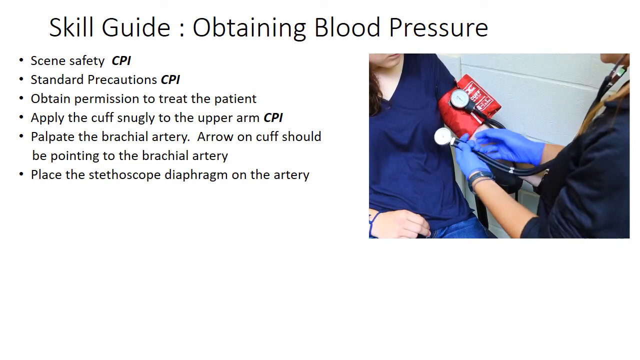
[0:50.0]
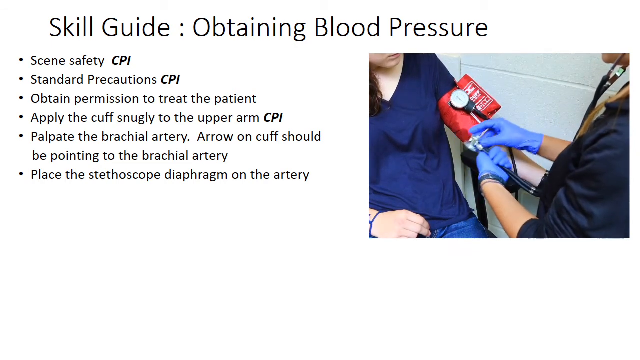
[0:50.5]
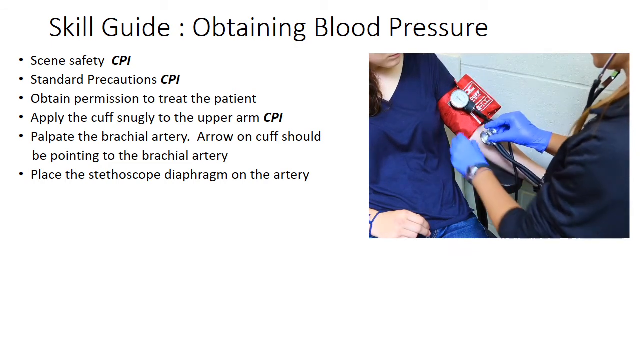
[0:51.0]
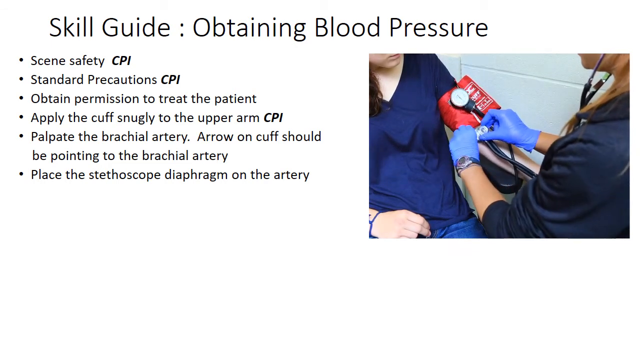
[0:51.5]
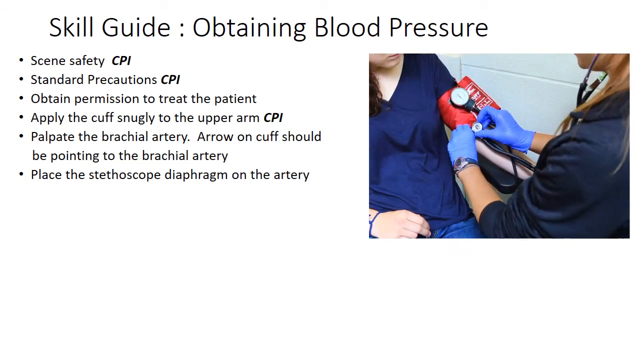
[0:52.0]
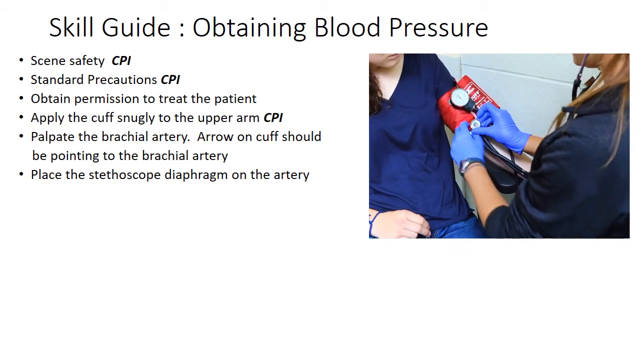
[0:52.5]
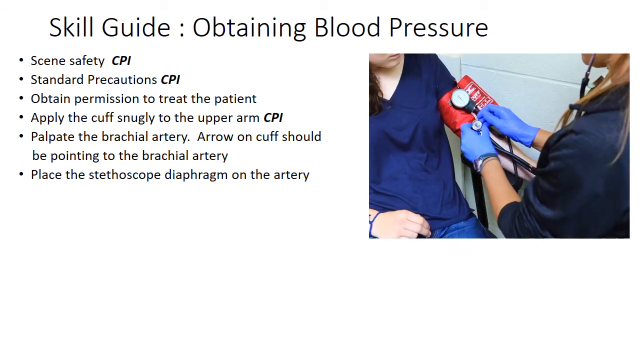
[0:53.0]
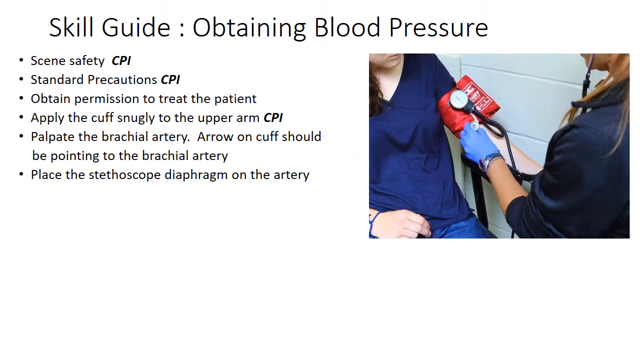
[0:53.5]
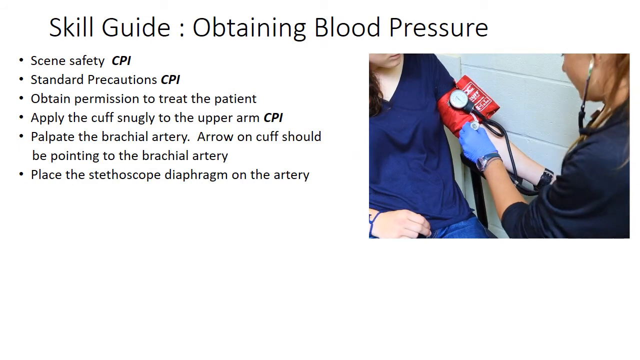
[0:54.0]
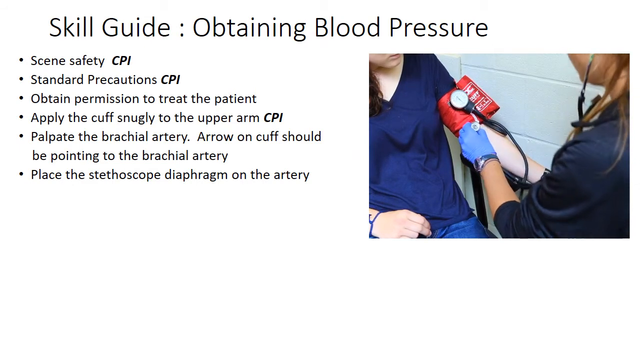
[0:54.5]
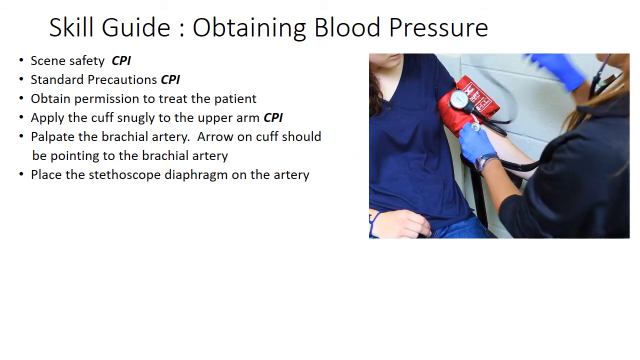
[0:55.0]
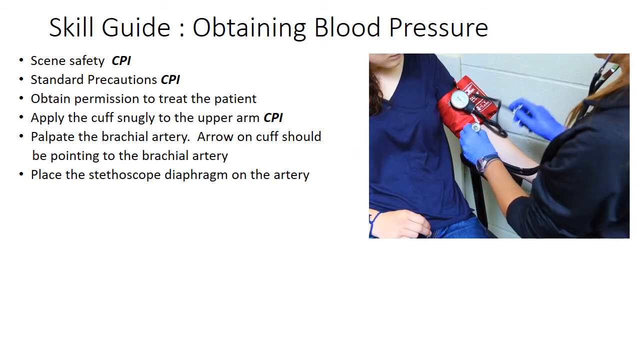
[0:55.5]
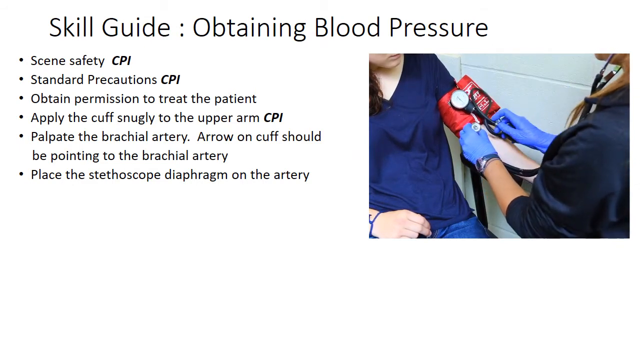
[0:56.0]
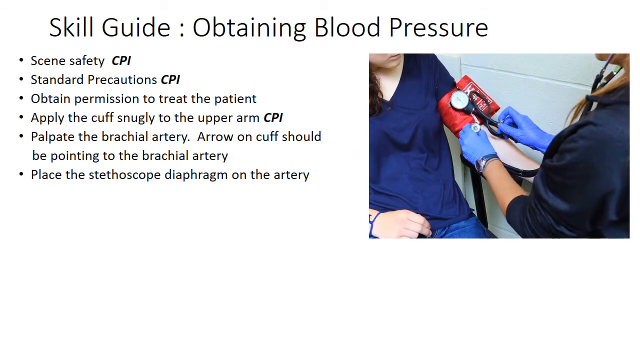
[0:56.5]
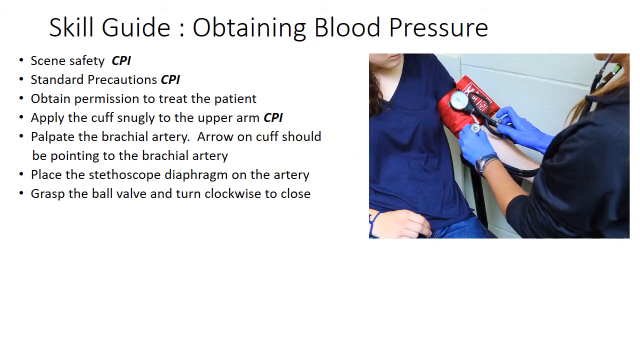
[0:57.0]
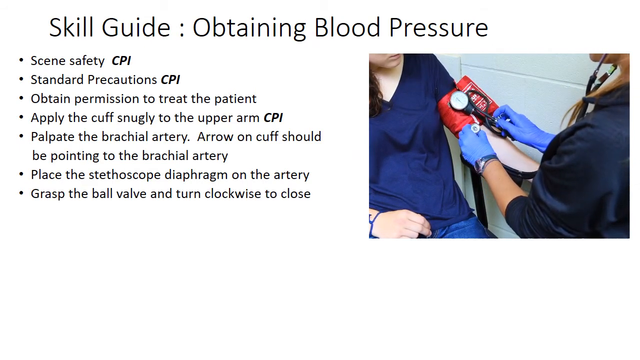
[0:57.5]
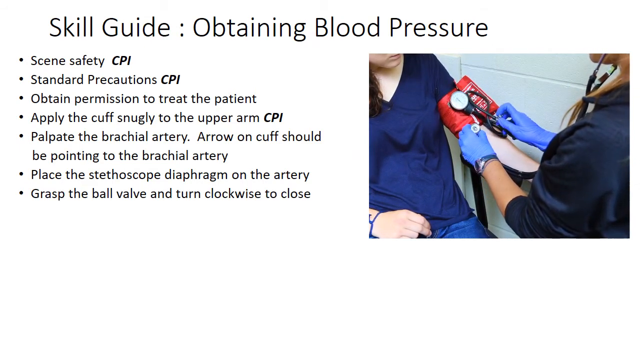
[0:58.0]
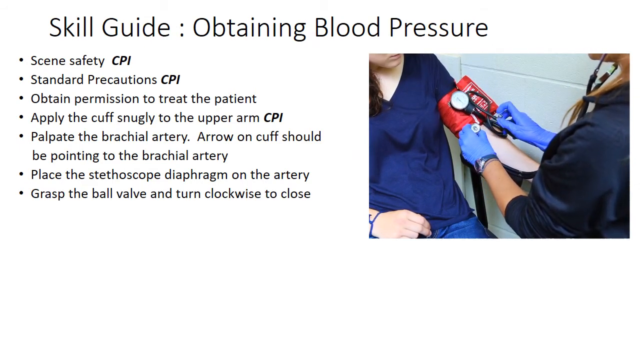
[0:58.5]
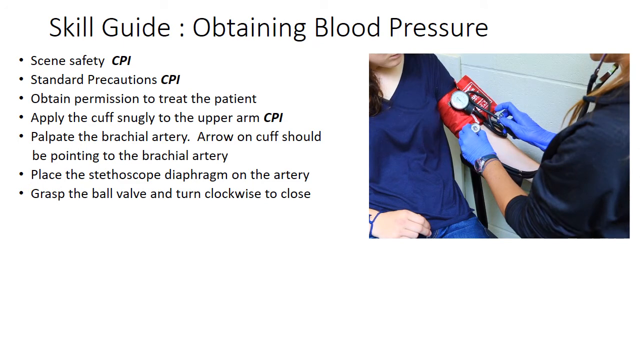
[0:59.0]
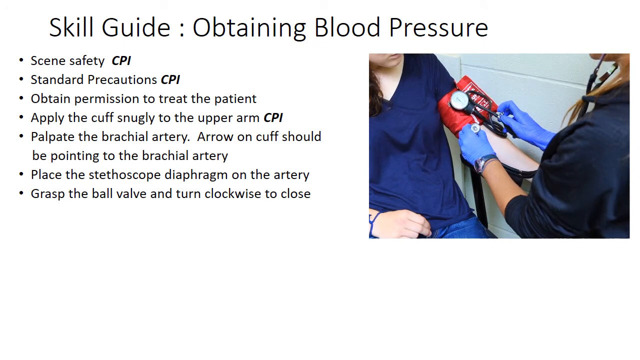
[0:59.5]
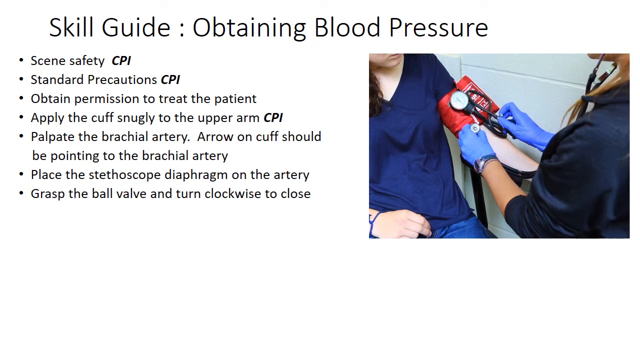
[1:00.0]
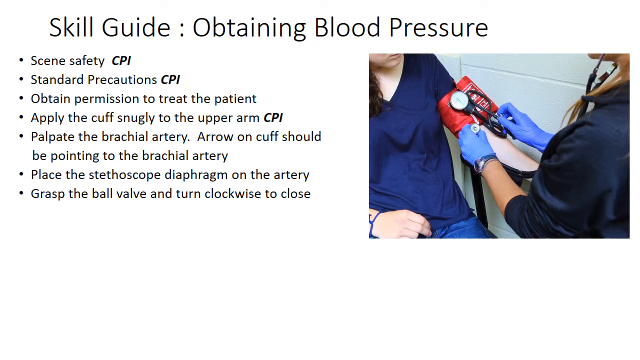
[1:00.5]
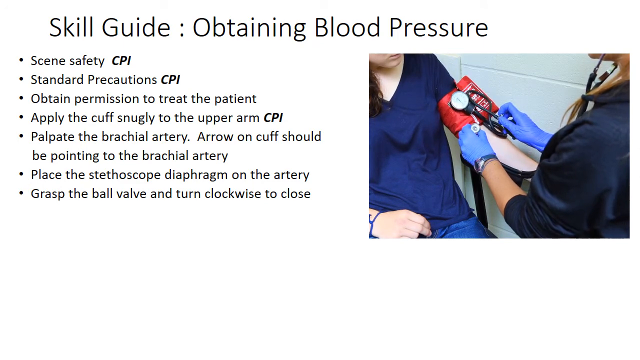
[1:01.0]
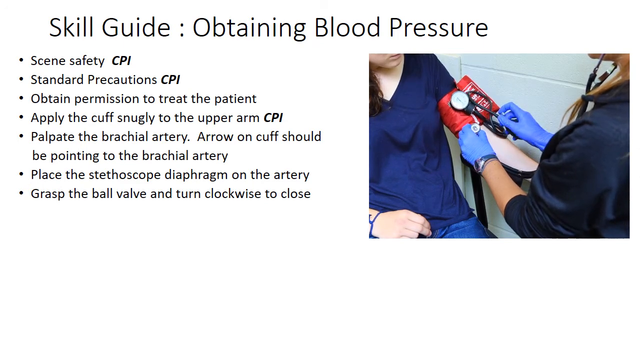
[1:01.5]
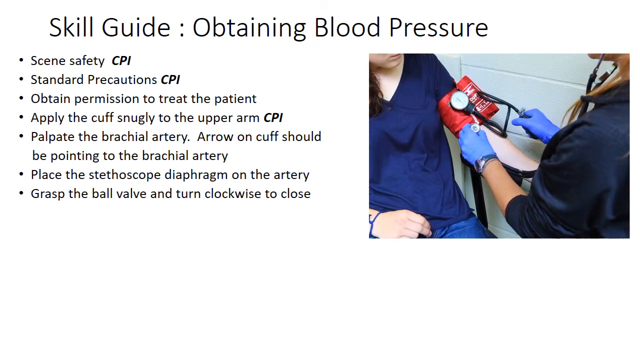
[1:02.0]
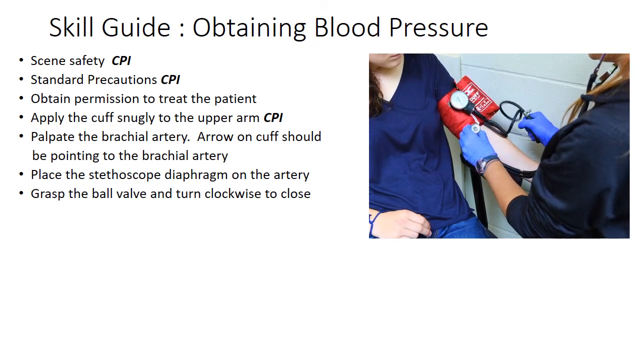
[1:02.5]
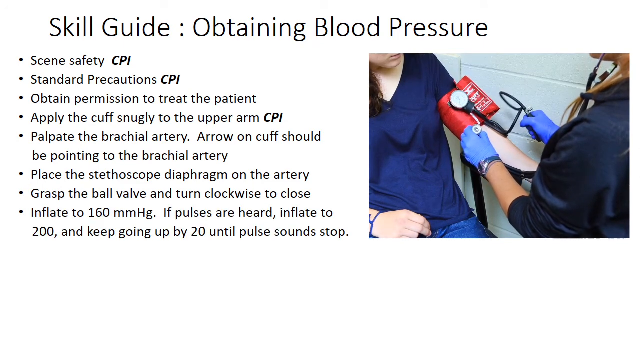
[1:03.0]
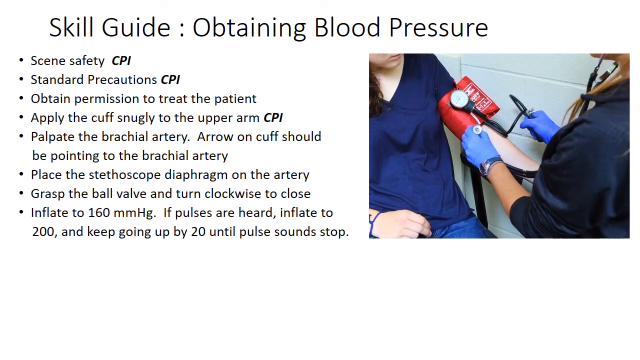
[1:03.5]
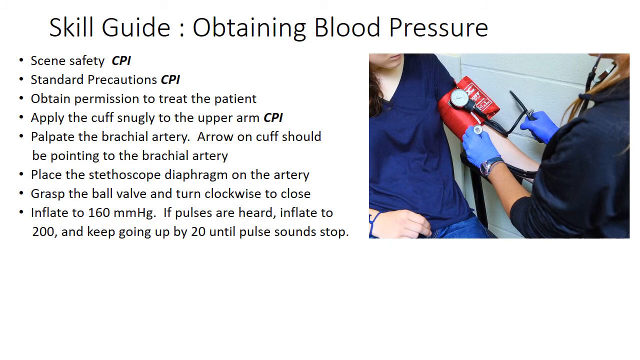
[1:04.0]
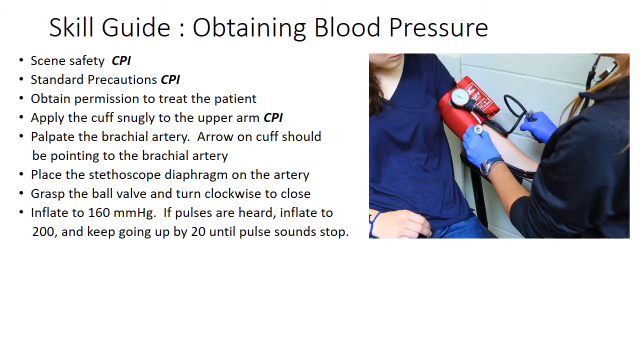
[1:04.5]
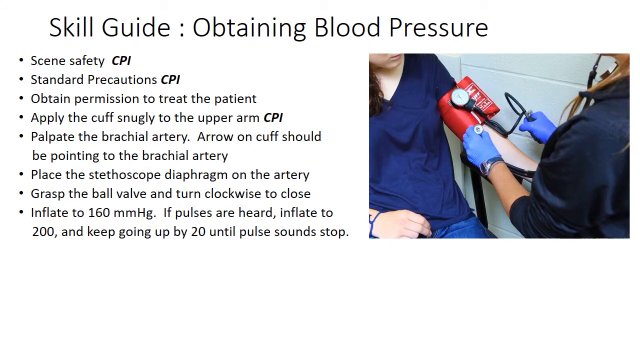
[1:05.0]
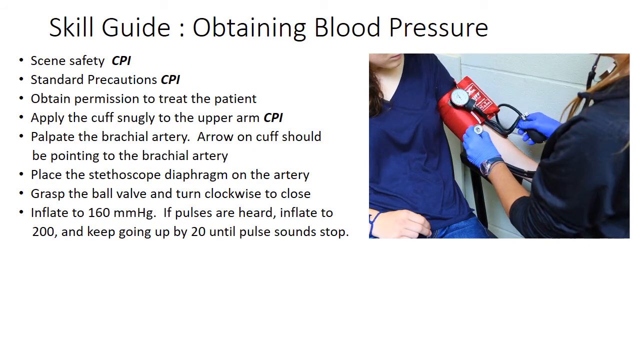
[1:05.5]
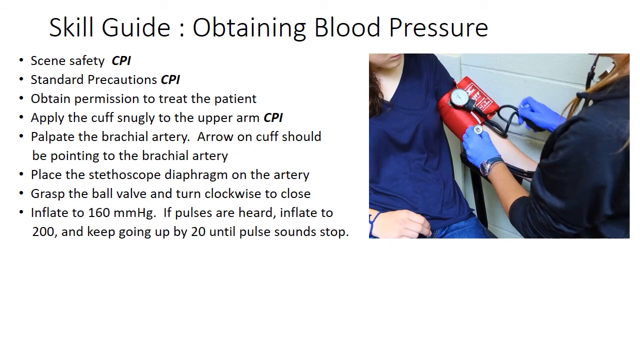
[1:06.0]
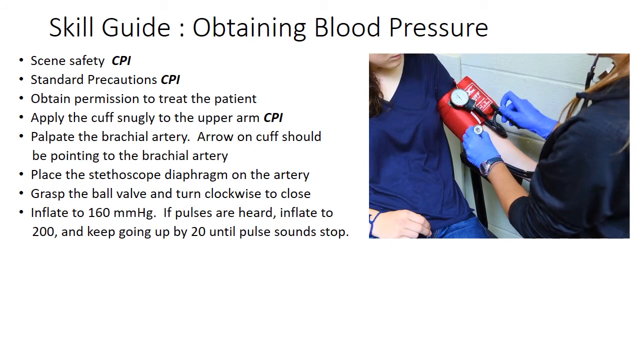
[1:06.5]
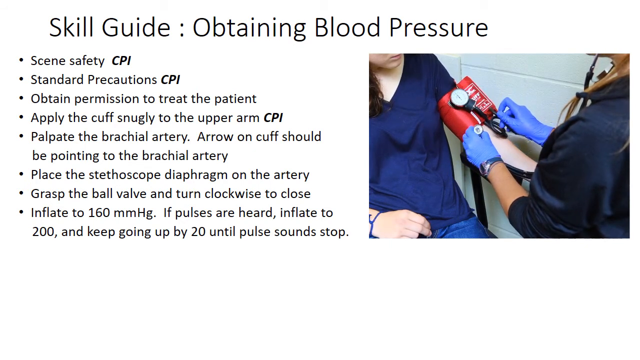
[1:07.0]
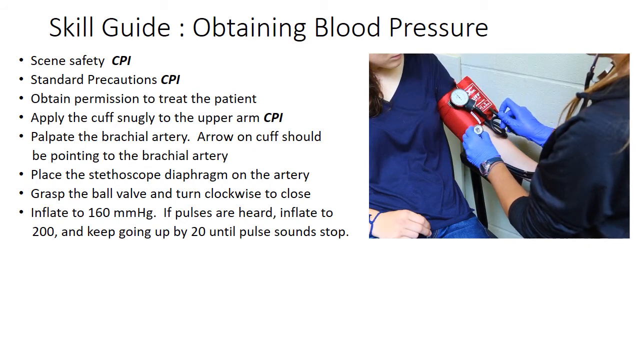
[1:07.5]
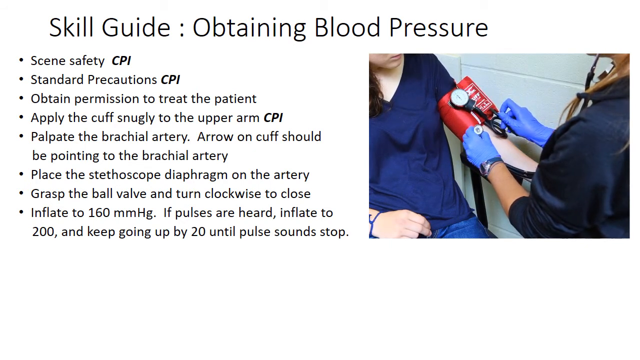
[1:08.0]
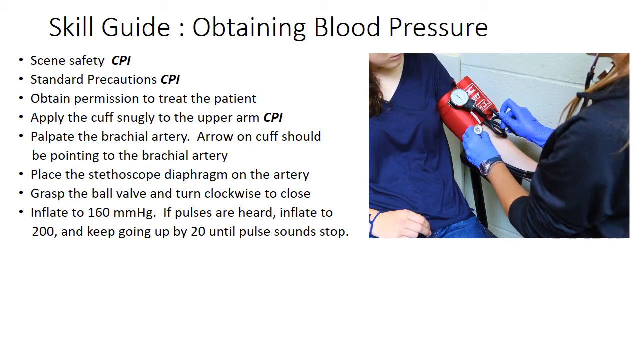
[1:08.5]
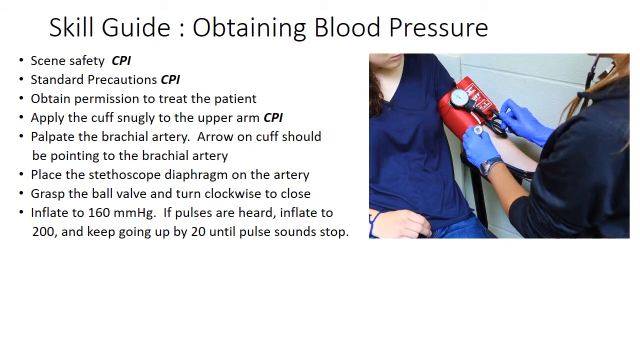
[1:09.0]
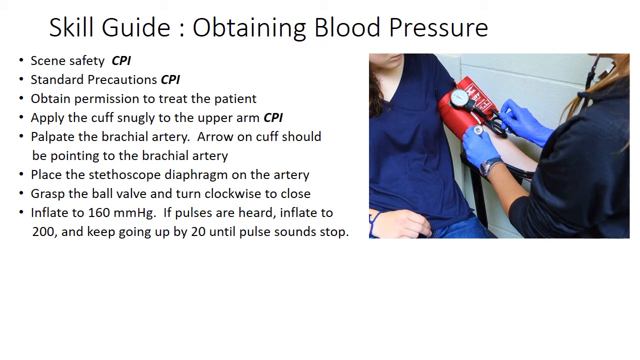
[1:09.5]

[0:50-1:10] Text is titled "Skill guide obtaining blood pressure," with bullet points in the top left corner: "scene safety, CPI," "standard precautions, CPI," "obtain permission to treat the patient," "apply the cuff snugly to the upper arm, CPI," "palpate the brachial artery," "arrow on cuff should be pointing to the brachial artery" and "place the stethoscope diaphragm on the artery." In the top right corner of the picture, a person is seated in a navy blue V-neck t-shirt and jeans, with a red blood pressure cuff attached to their arm. Across from the seated person, someone with a stethoscope, a black shirt and blue latex gloves is checking the person's pulse. The face of the person having their blood pressure checked is not visible; only their lips and chin can be seen. The room has concrete block walls painted white.